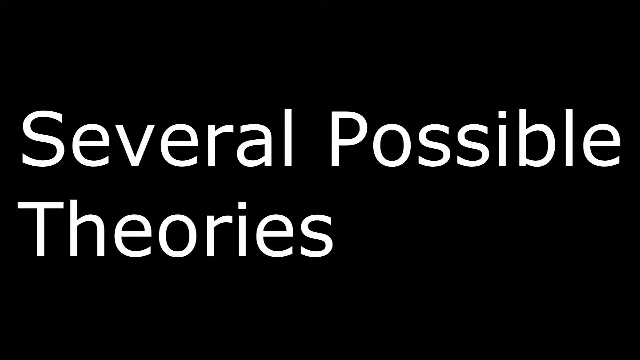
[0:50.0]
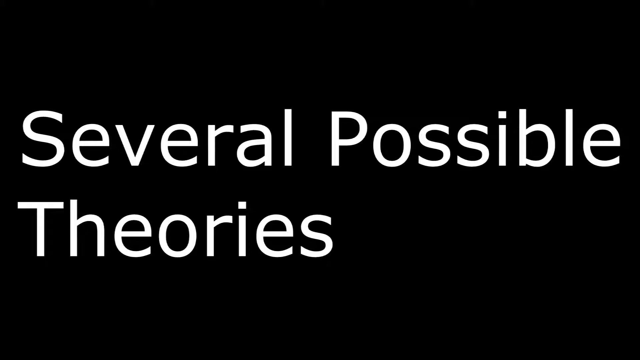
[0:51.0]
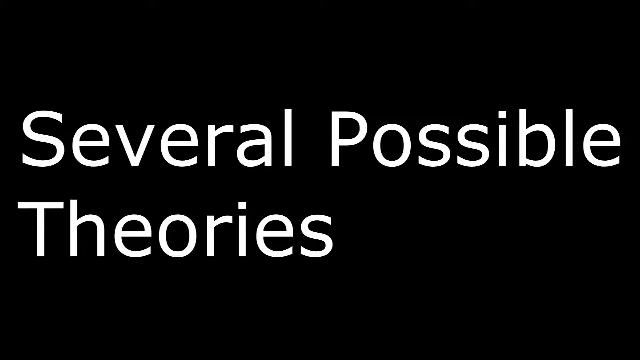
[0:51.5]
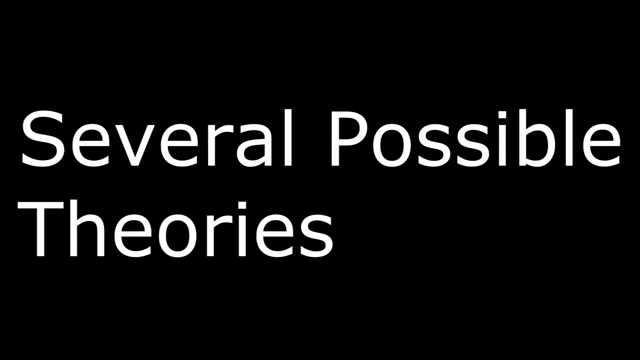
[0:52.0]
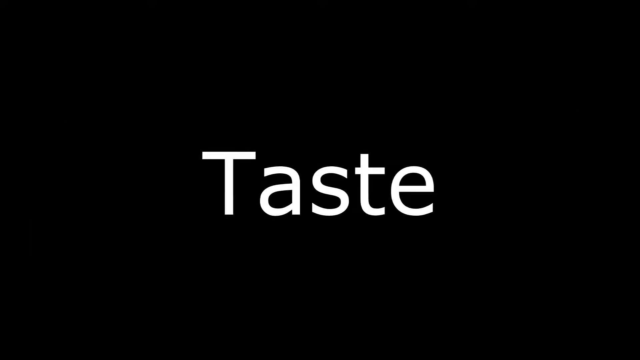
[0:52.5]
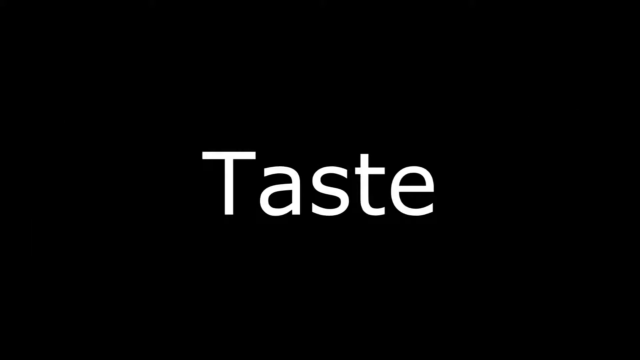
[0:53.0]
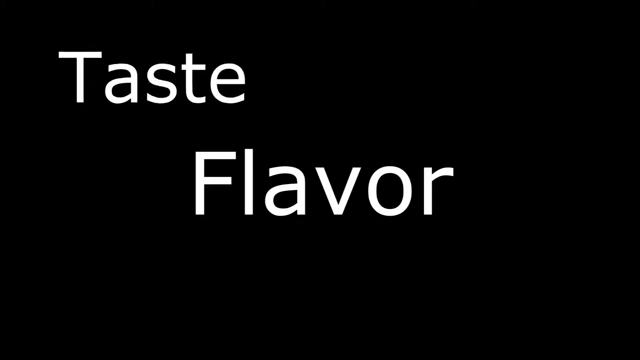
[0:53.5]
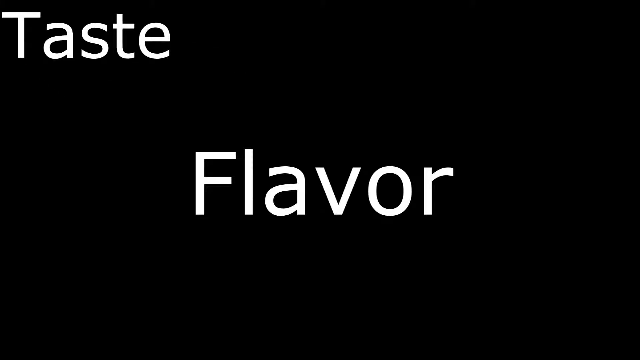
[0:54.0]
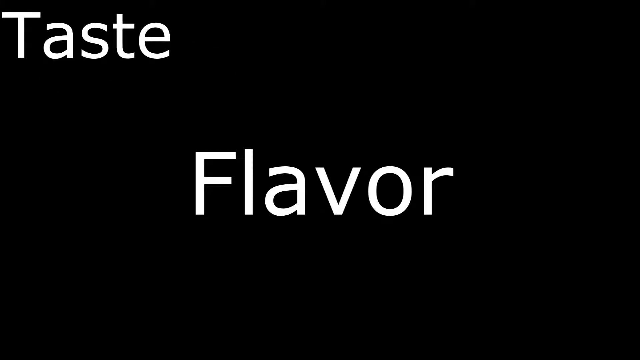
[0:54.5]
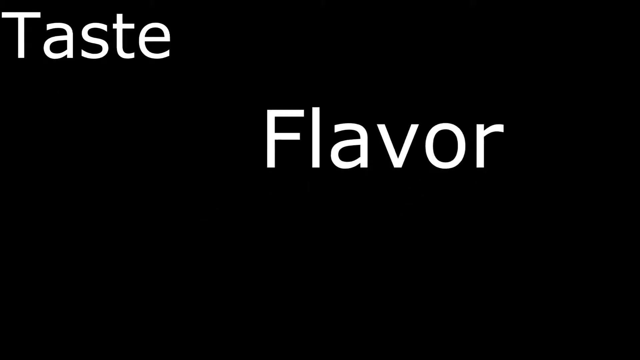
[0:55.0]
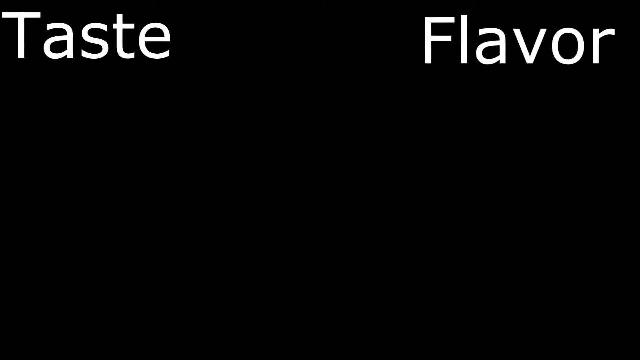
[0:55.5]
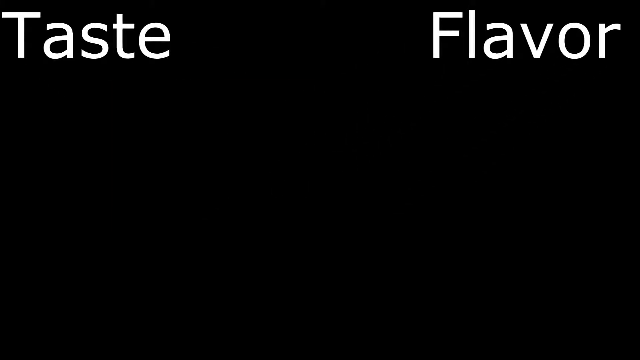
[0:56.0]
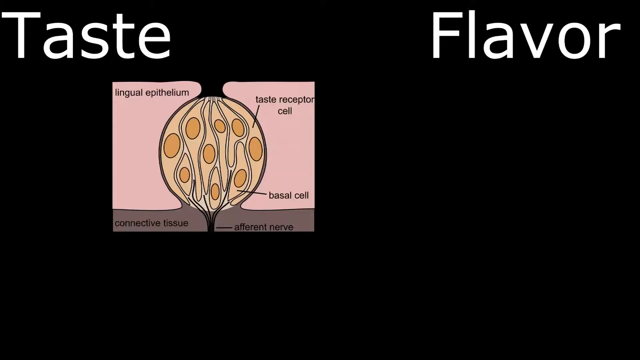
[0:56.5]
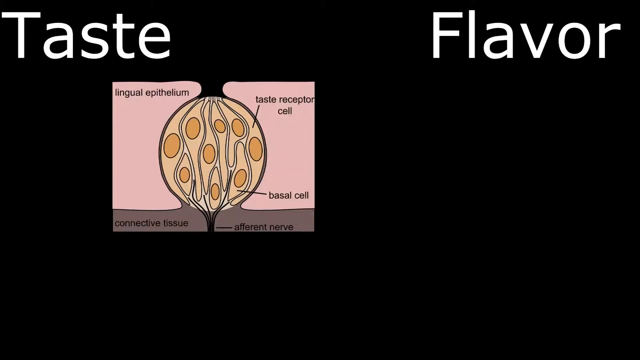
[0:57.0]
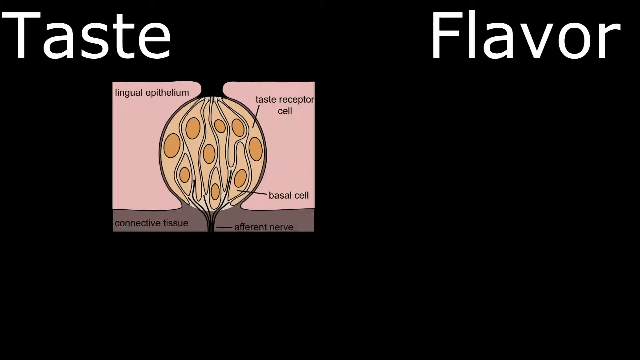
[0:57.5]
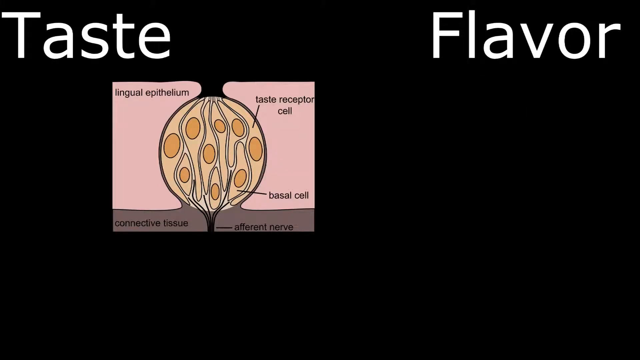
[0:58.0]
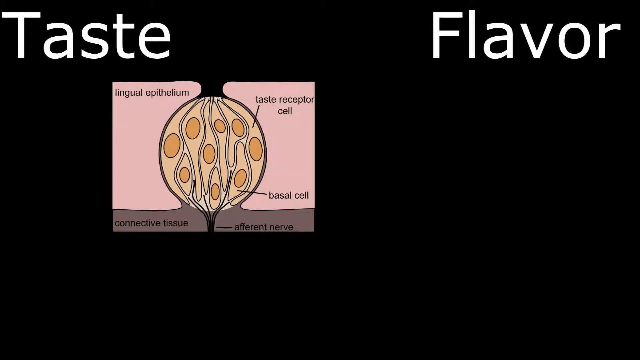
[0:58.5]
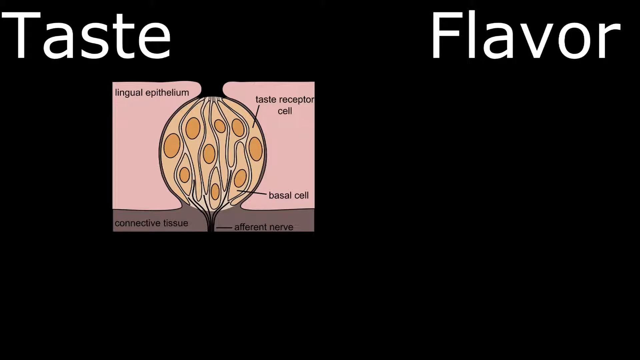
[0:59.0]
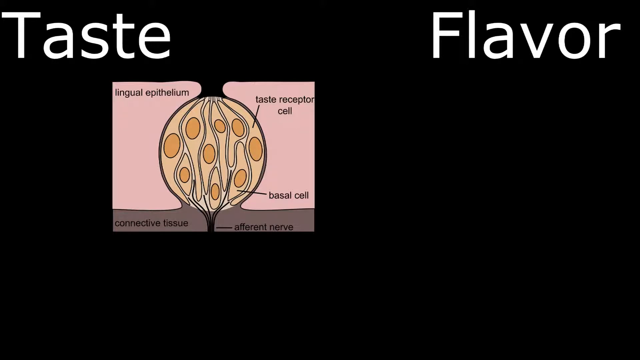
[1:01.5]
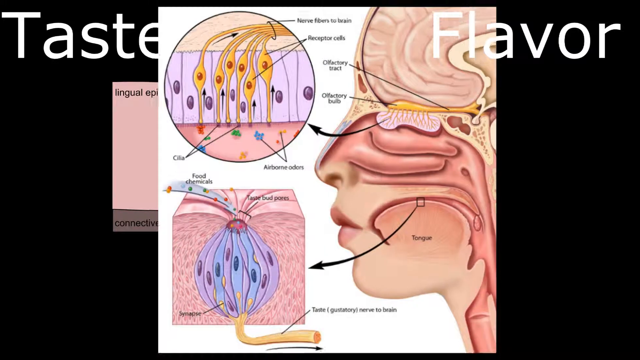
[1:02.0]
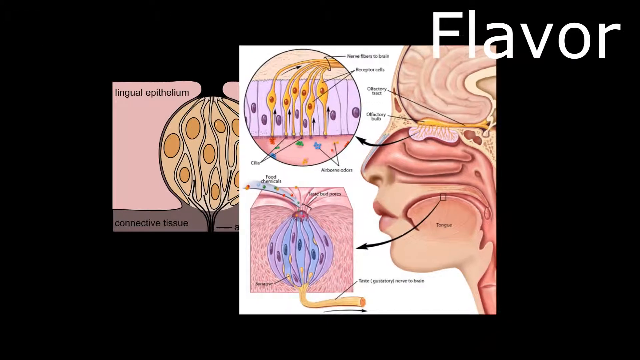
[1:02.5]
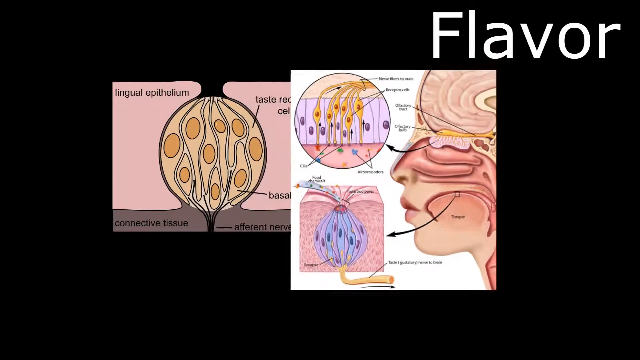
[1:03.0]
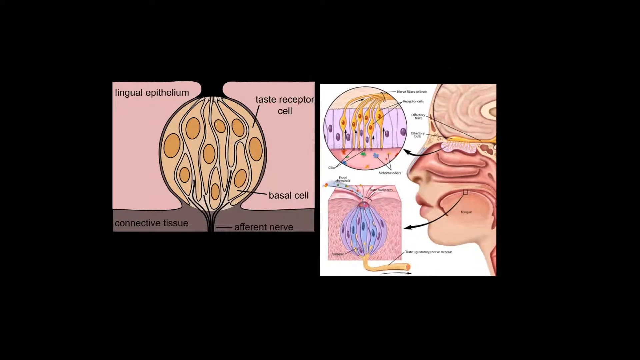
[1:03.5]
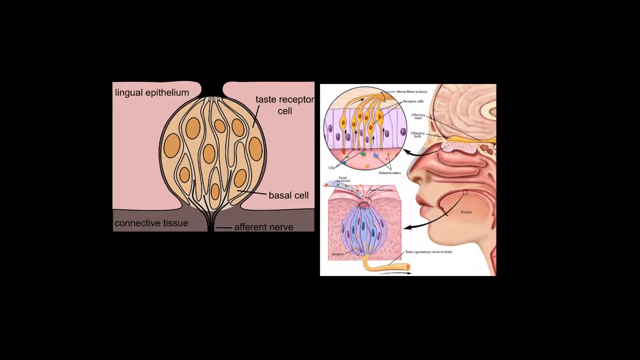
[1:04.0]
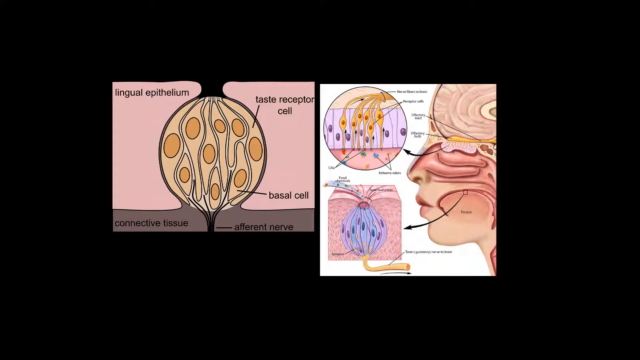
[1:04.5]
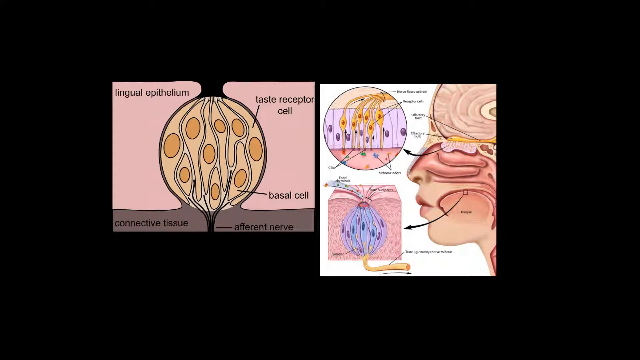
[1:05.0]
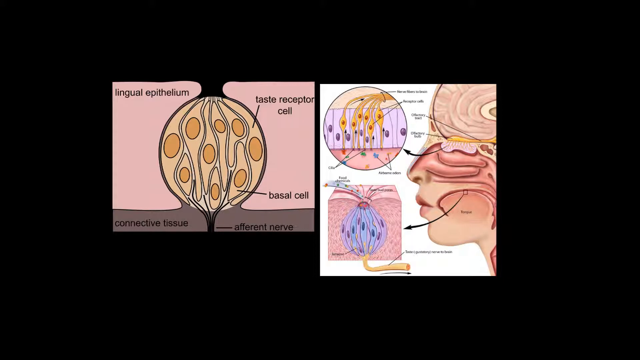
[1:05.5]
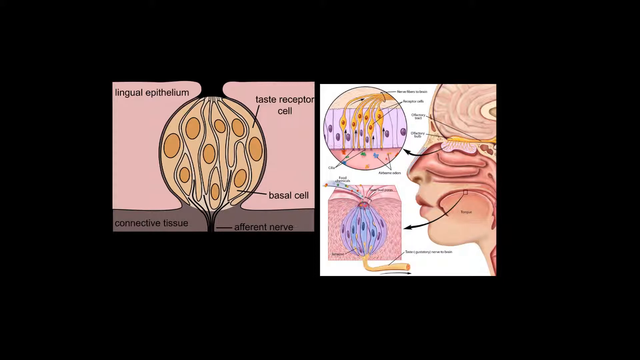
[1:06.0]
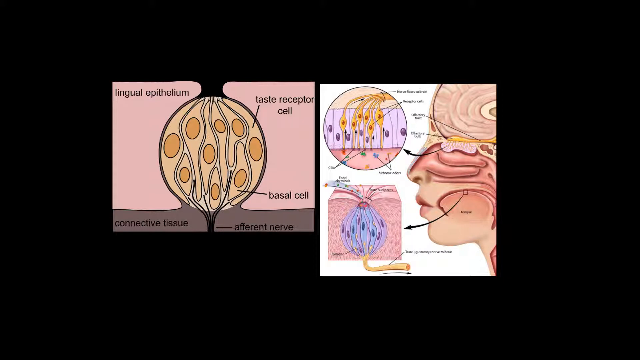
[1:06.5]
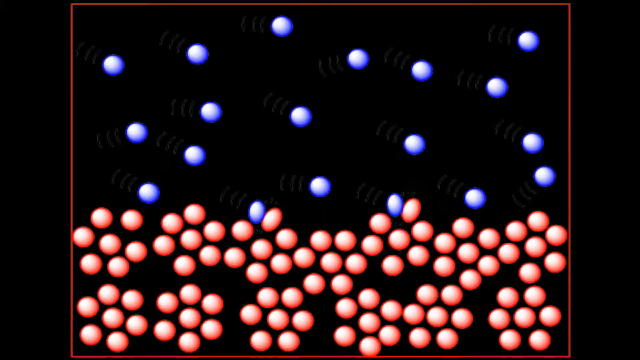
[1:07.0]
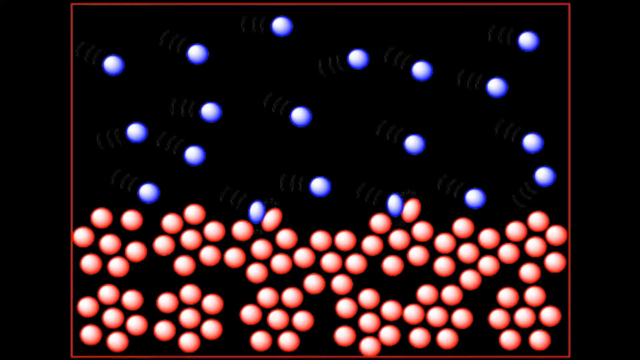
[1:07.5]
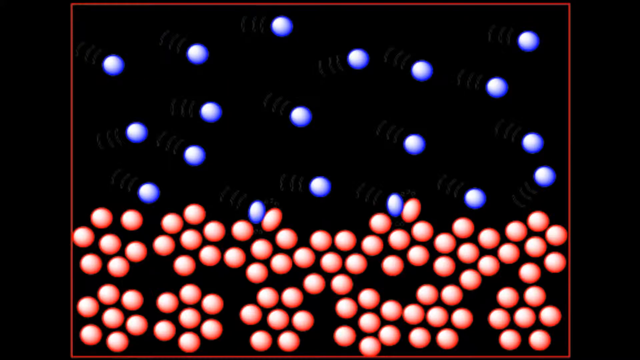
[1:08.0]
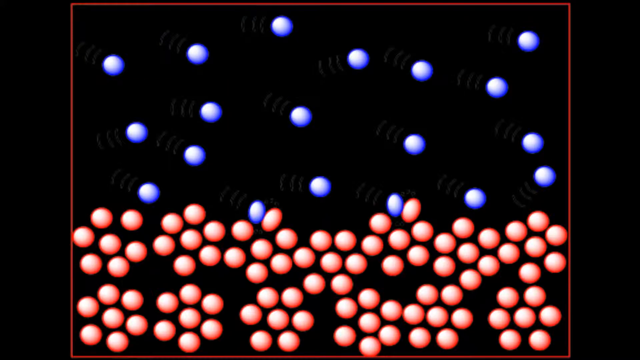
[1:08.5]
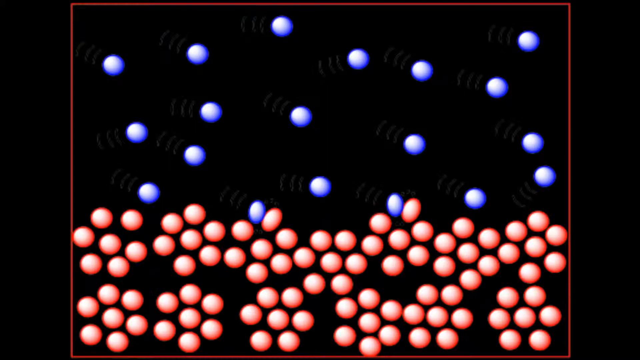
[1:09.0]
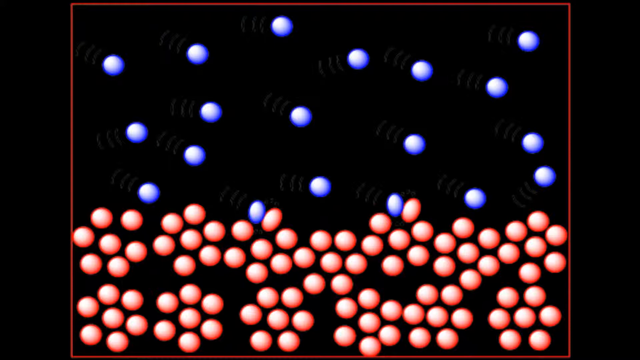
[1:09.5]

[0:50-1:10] The text reads "several possible theories for why this food tastes better when it's hot." Further text mentions "taste", "flavor" and "taste receptor cells", alongside what appears to be a diagram of a taste bud. Next comes the inside of the mouth, showing the tongue with taste buds meeting food particles. Most of the text is white on a solid black background.